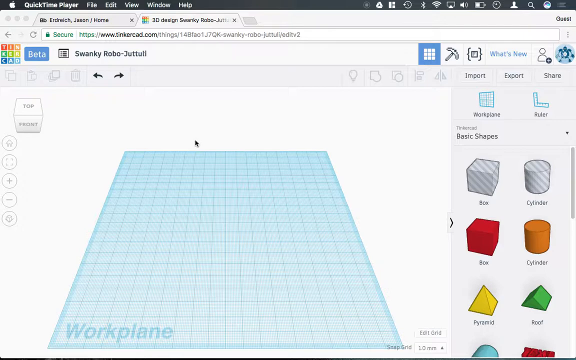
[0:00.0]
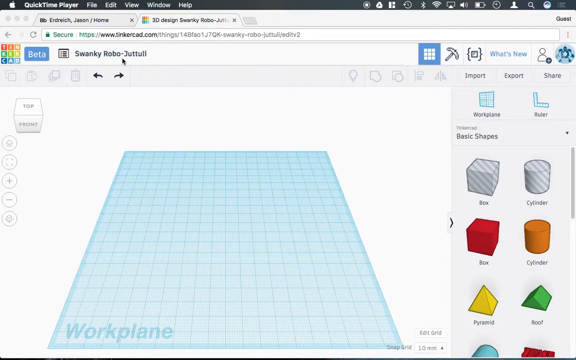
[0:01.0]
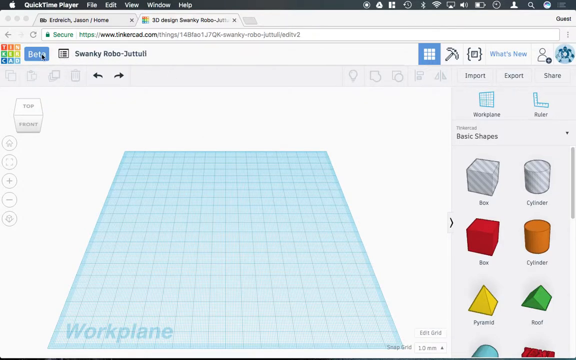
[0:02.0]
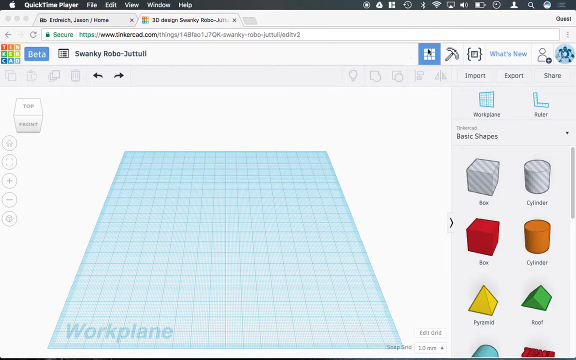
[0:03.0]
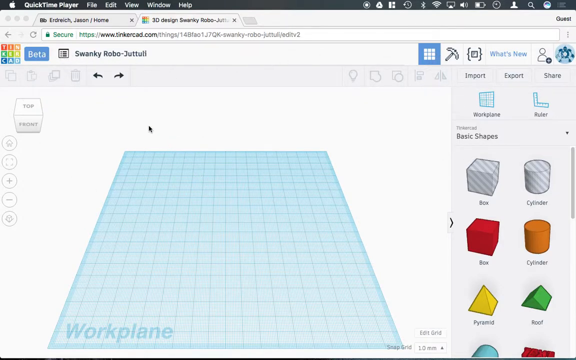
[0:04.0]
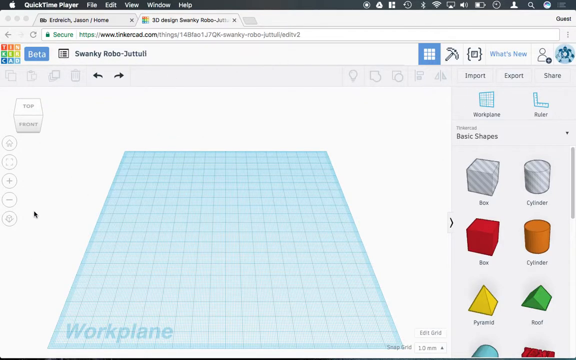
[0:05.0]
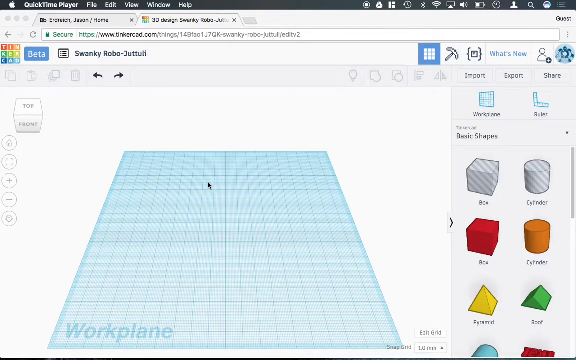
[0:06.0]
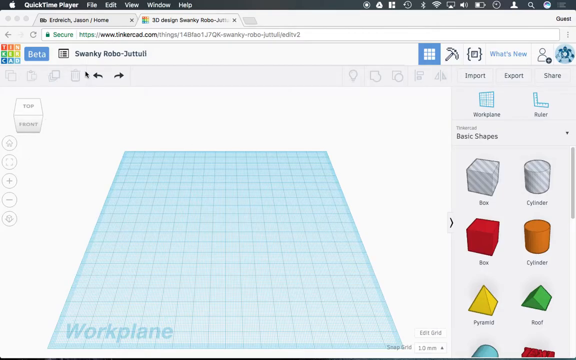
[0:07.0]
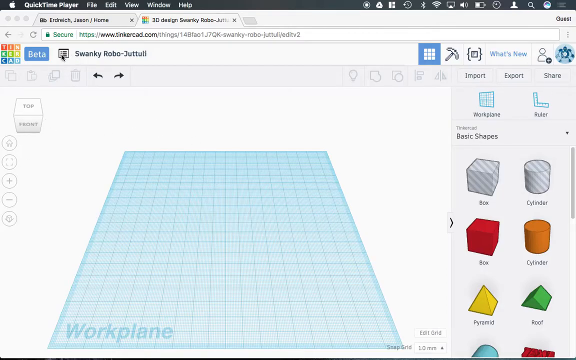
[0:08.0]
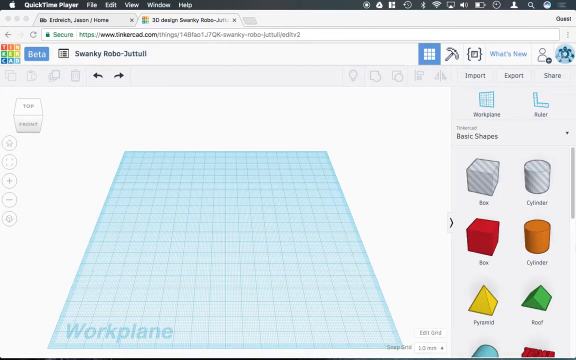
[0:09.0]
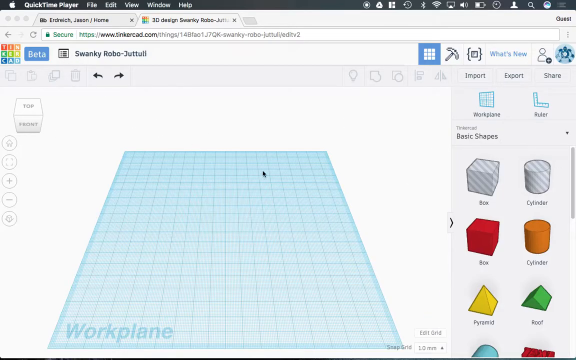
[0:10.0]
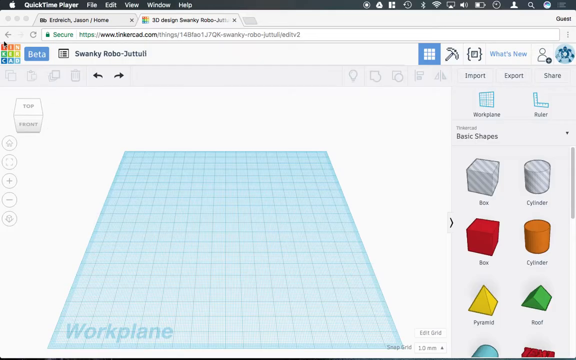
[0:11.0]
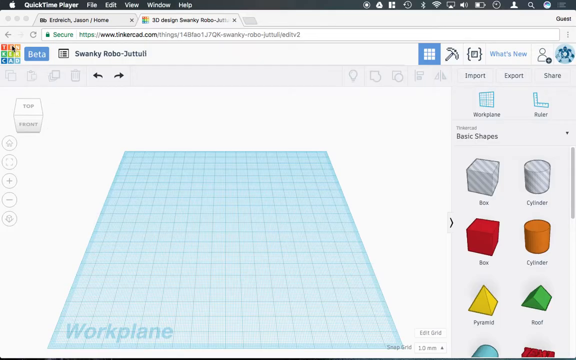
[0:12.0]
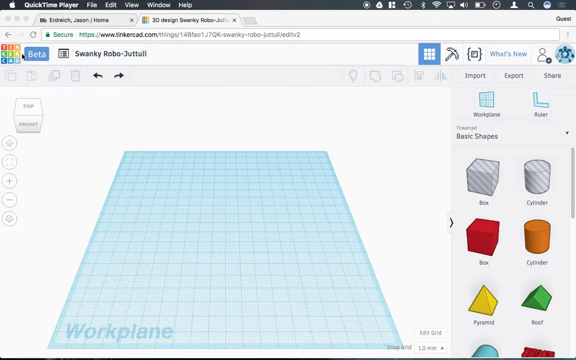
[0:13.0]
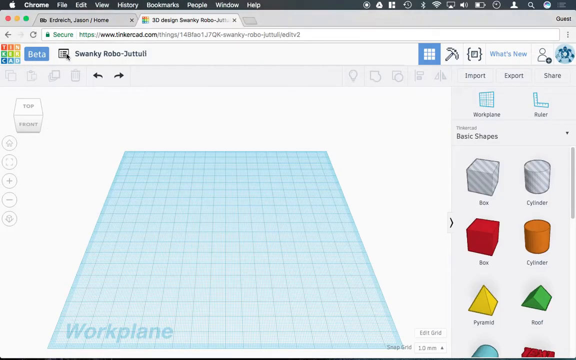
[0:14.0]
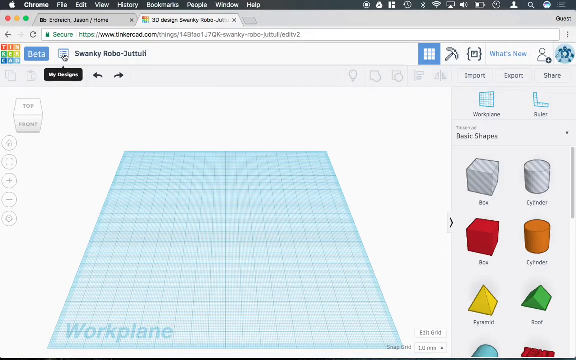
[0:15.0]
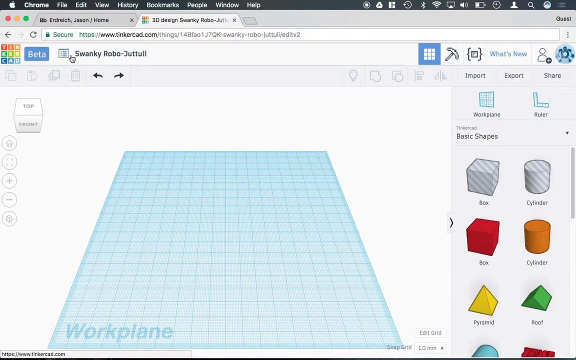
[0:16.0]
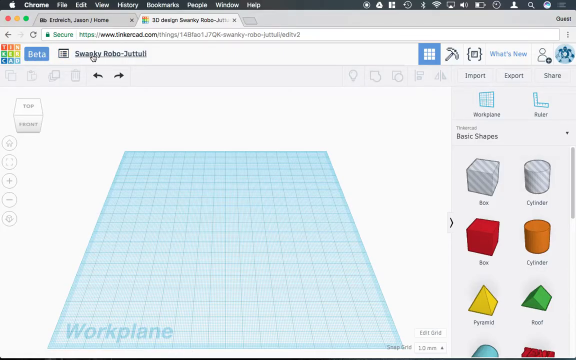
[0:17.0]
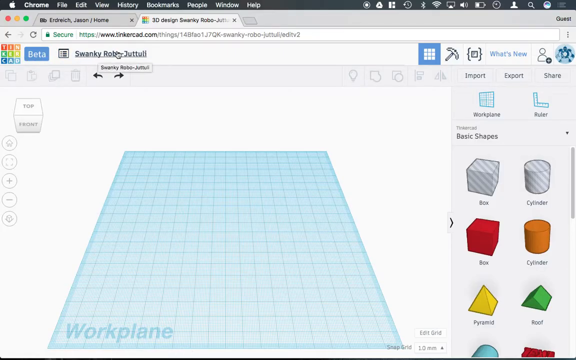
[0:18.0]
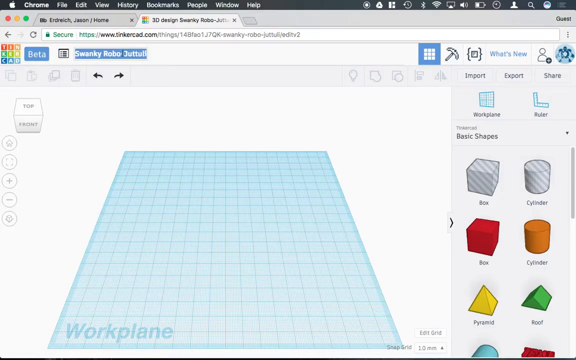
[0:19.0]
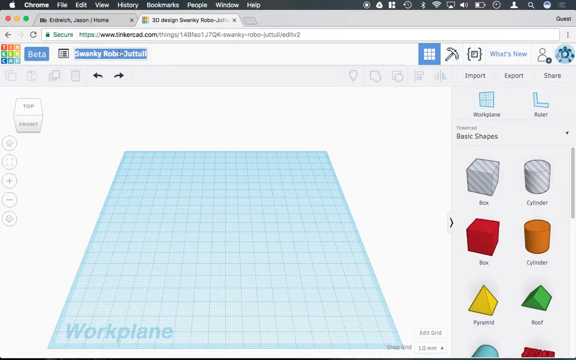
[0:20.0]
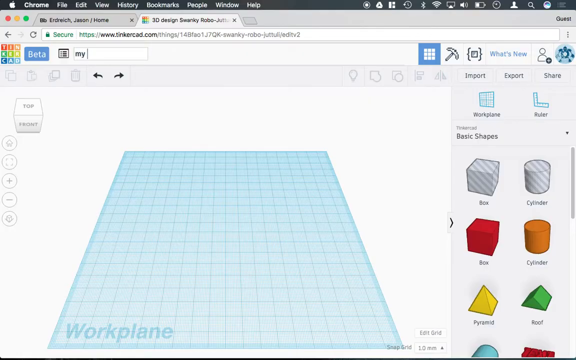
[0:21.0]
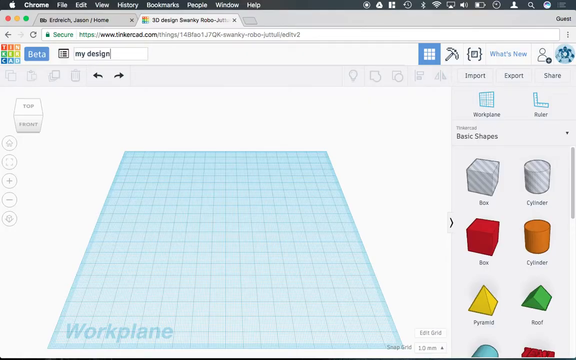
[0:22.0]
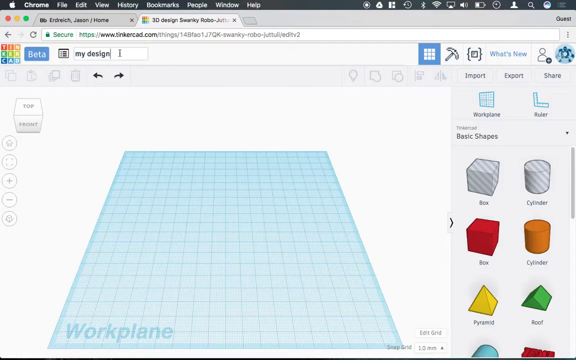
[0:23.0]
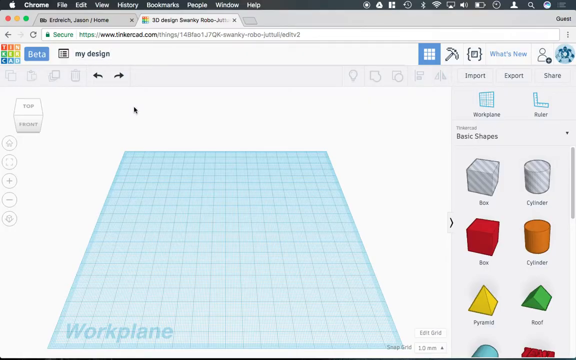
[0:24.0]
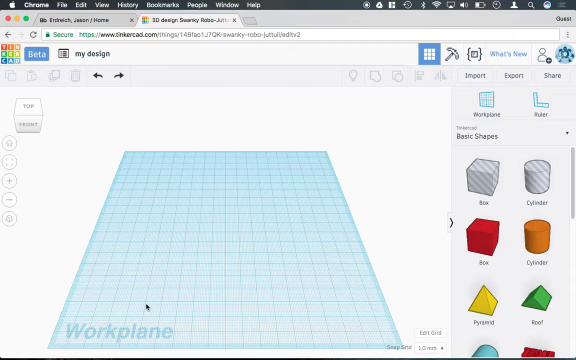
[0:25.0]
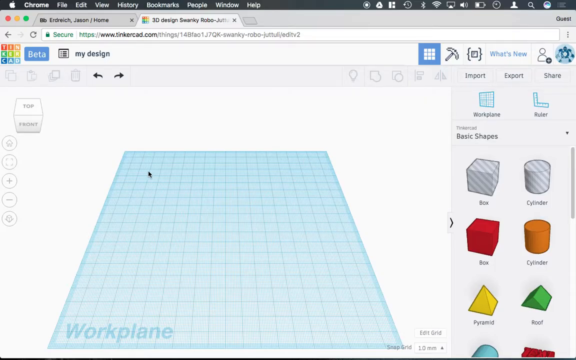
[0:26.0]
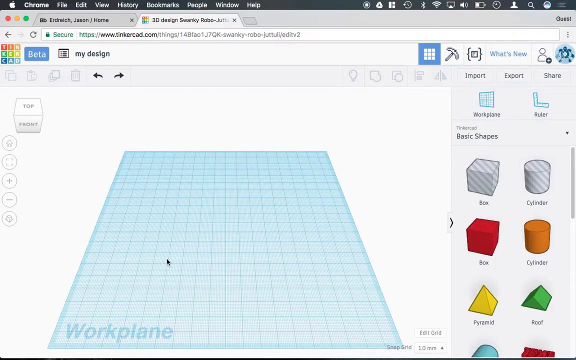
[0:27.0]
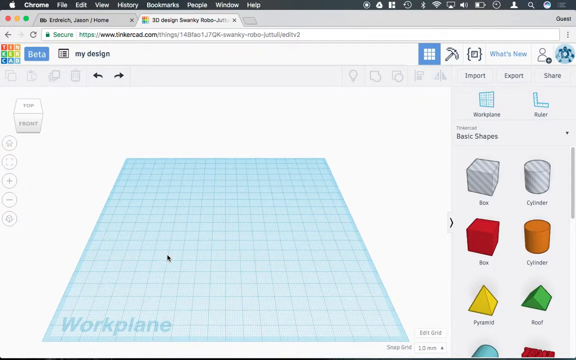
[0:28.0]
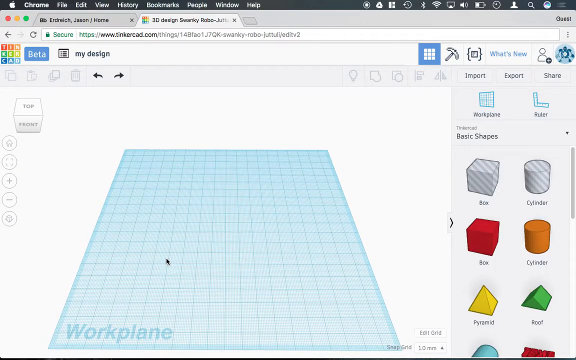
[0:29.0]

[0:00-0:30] A screen recording on an Apple Mac laptop or desktop computer shows a browser tab open on the Tinkercad website, a web-based 3D design tool. The user hovers over the name of the design and renames it to "My design". The main screen has a white background with a light blue grid area. On the right-hand side are shapes that can be brought into the workspace, namely a box, cylinder, pyramid, and roof, in different shapes, shades, and colors. An Apple logo appears in the top left-hand corner, and the label "Chrome" in the top left-hand corner shows the browser is Google Chrome. A beta logo to the right of the Tinkercad logo in the top left-hand corner of the tab indicates that Tinkercad is in a beta version.